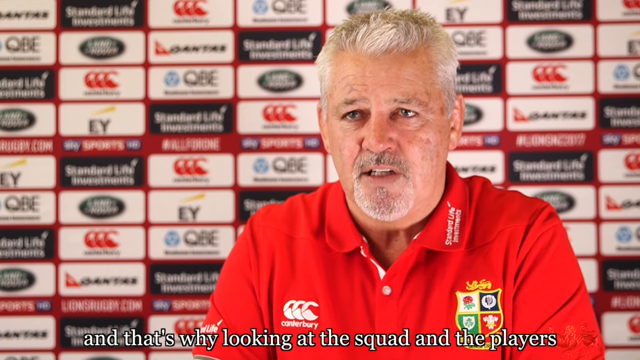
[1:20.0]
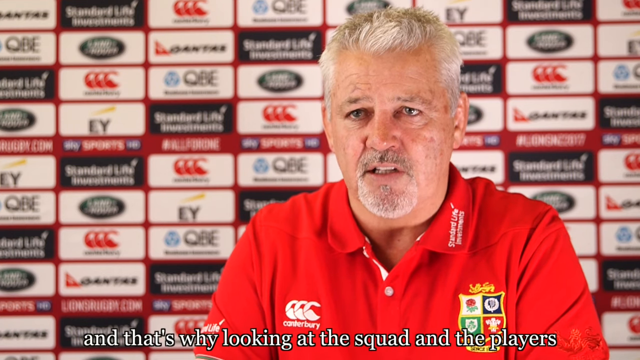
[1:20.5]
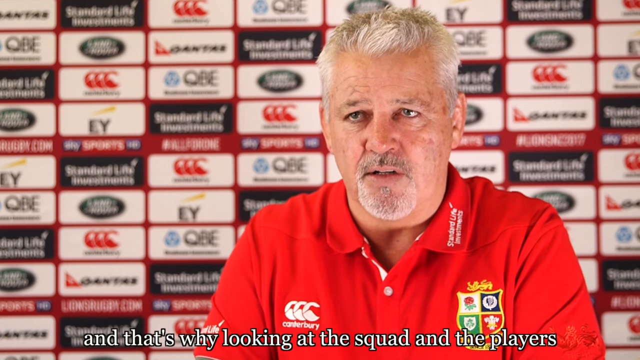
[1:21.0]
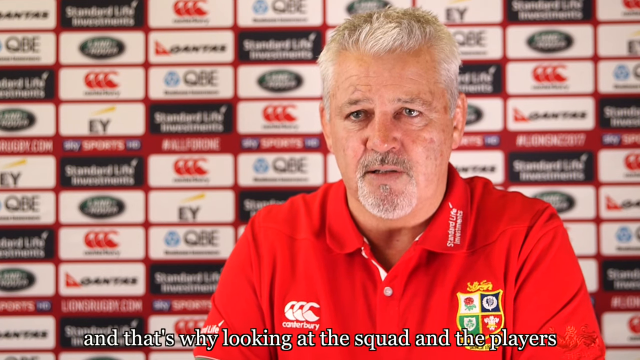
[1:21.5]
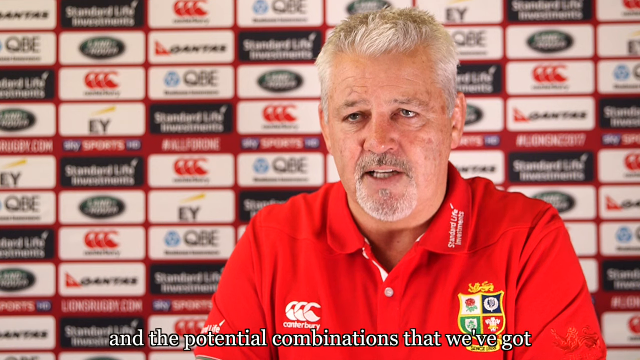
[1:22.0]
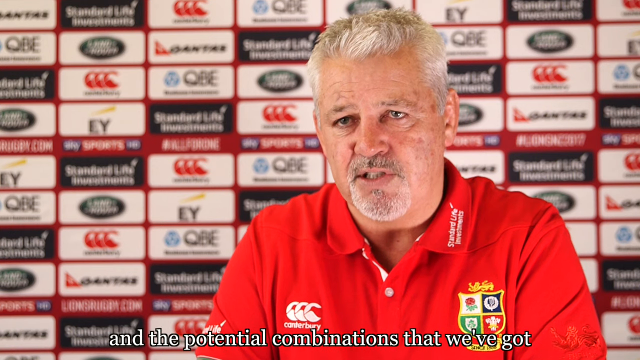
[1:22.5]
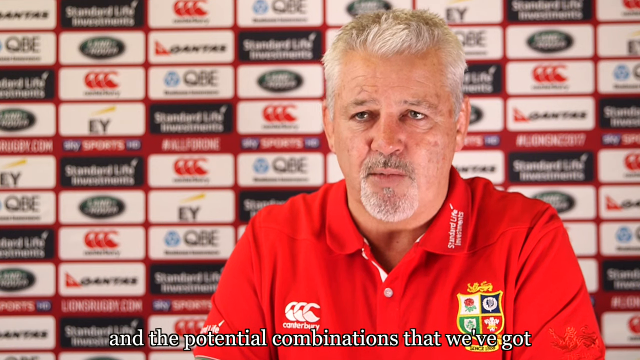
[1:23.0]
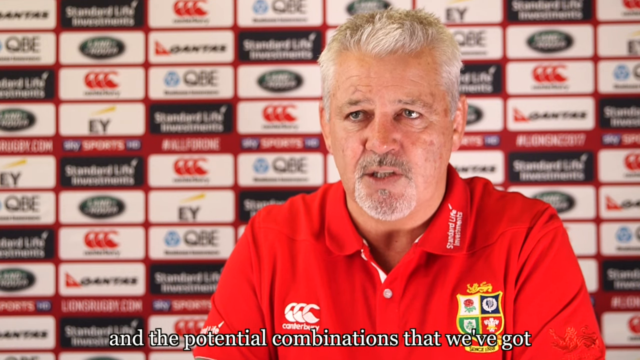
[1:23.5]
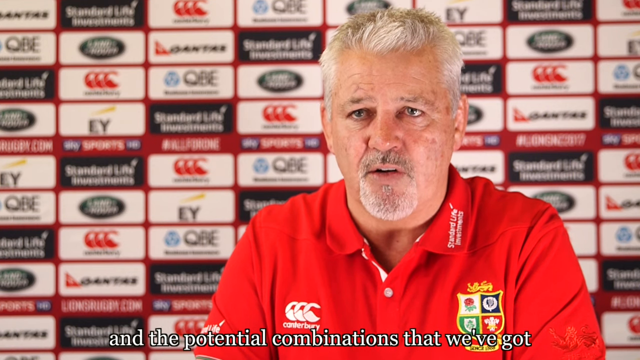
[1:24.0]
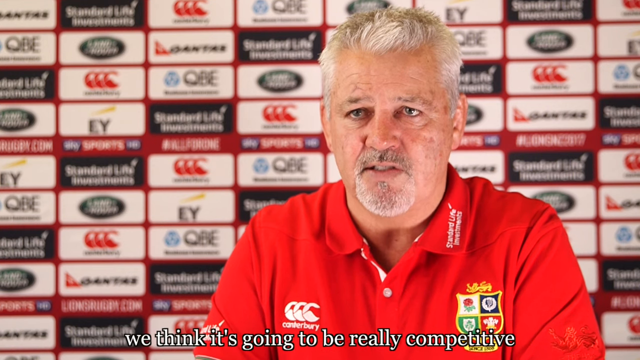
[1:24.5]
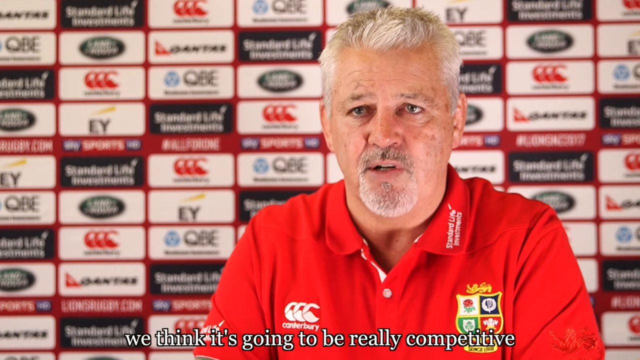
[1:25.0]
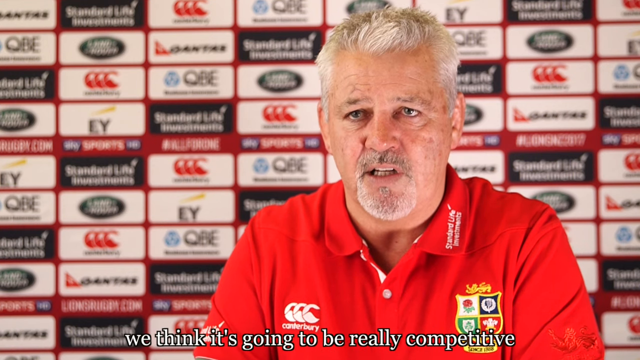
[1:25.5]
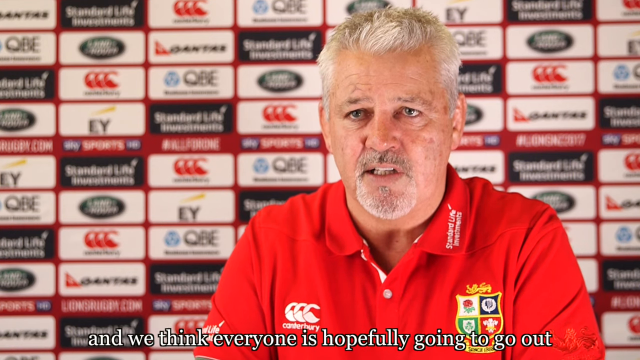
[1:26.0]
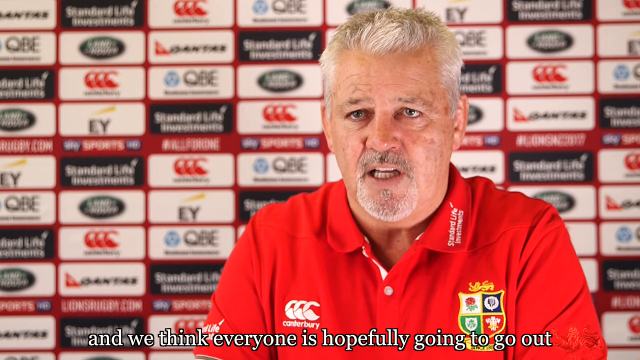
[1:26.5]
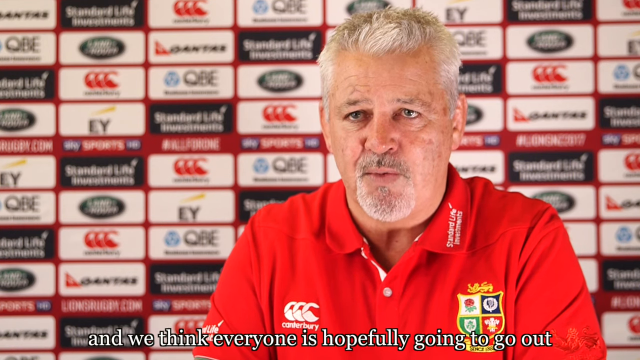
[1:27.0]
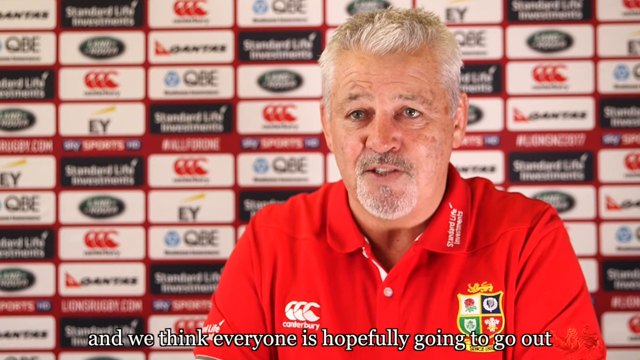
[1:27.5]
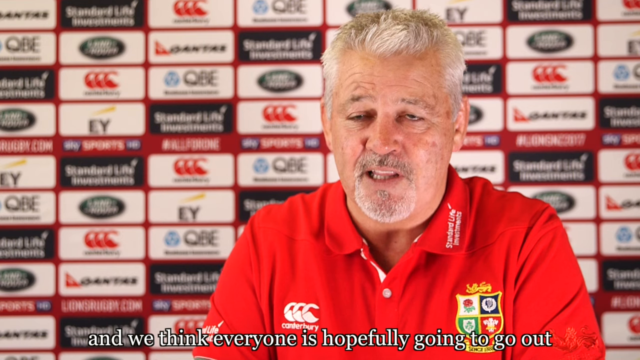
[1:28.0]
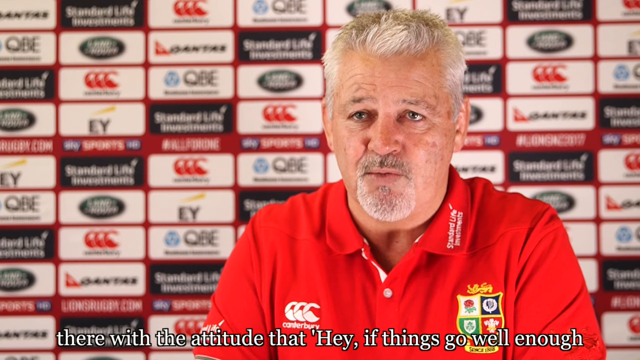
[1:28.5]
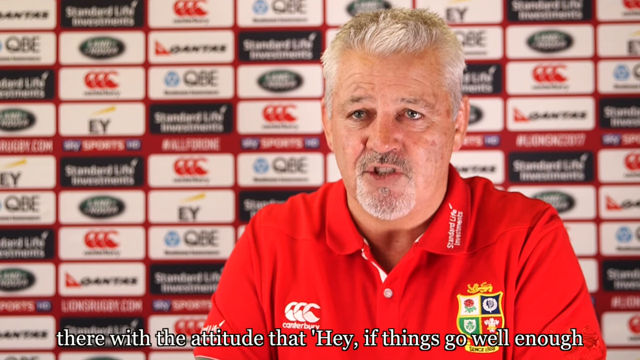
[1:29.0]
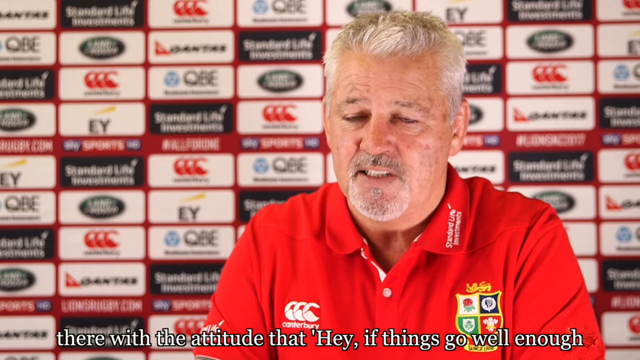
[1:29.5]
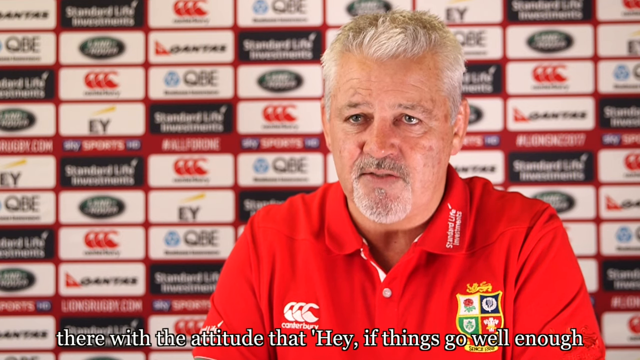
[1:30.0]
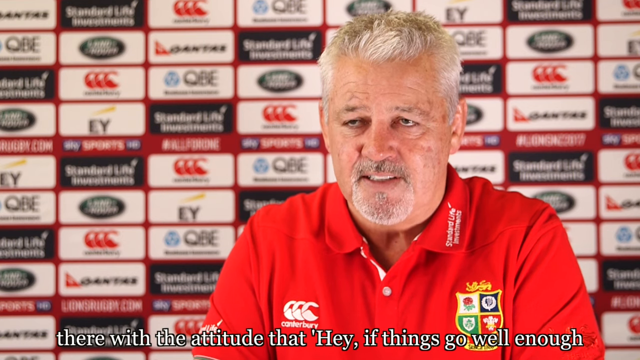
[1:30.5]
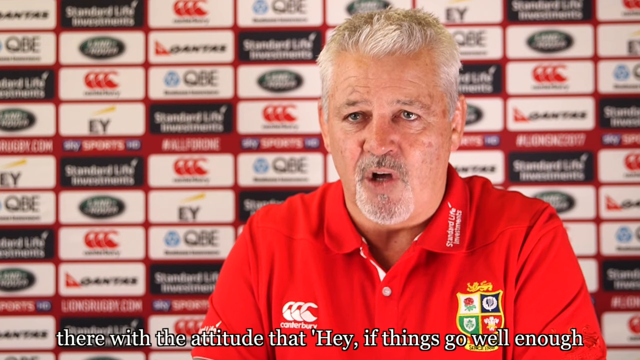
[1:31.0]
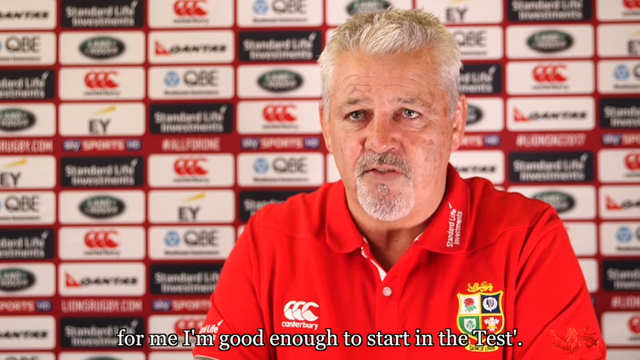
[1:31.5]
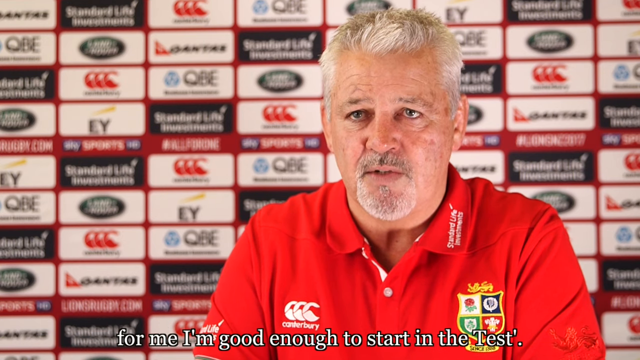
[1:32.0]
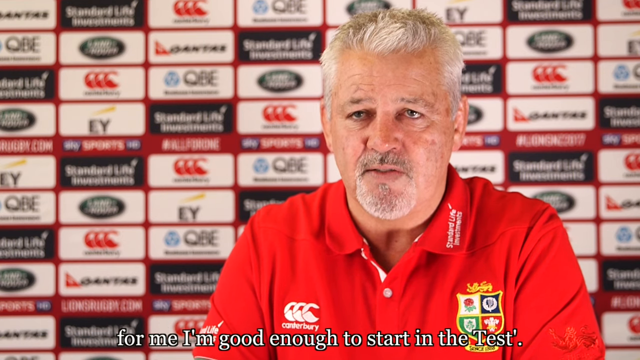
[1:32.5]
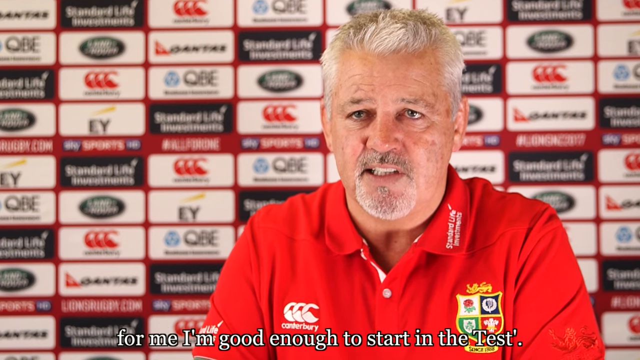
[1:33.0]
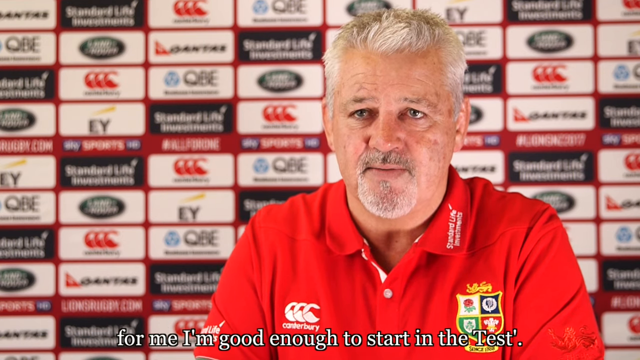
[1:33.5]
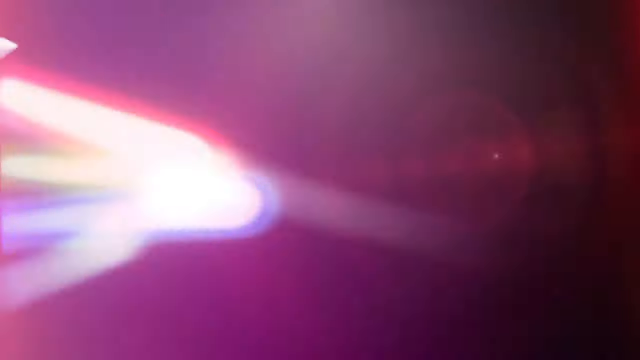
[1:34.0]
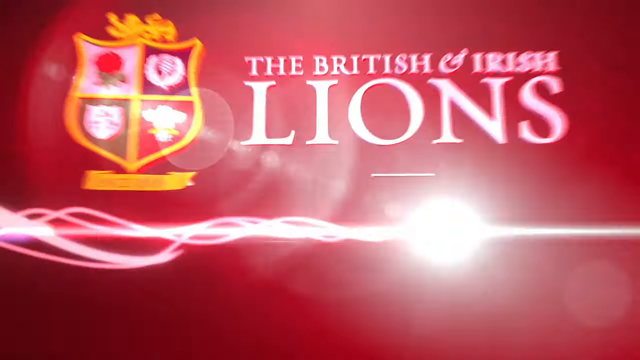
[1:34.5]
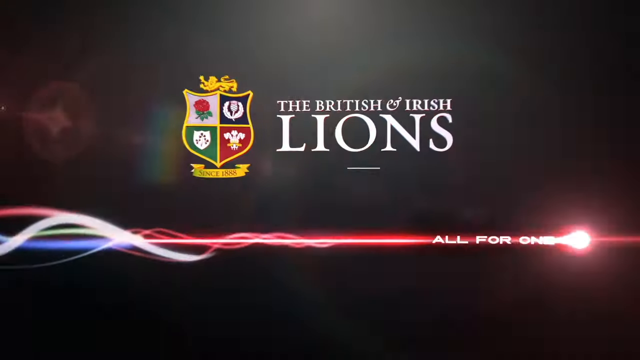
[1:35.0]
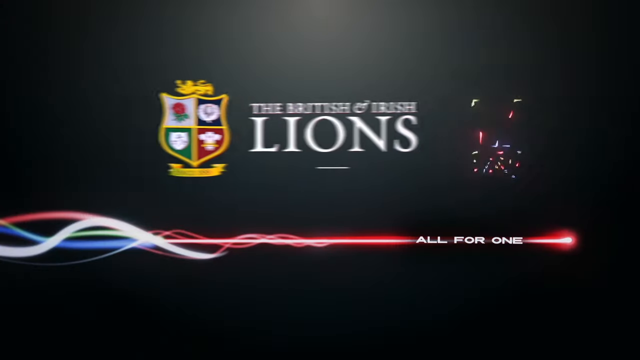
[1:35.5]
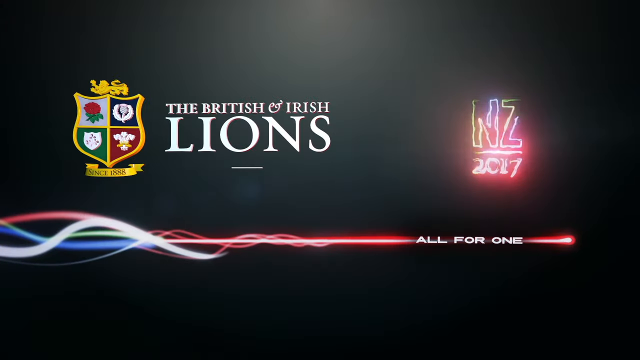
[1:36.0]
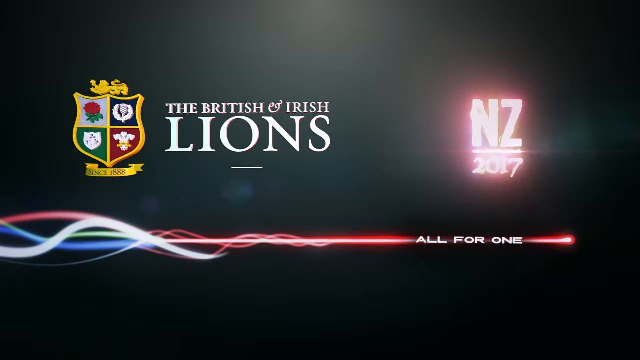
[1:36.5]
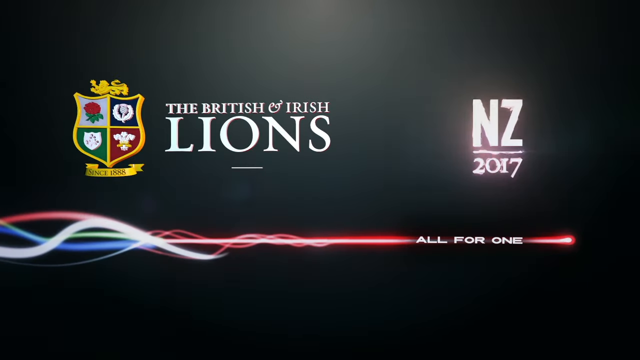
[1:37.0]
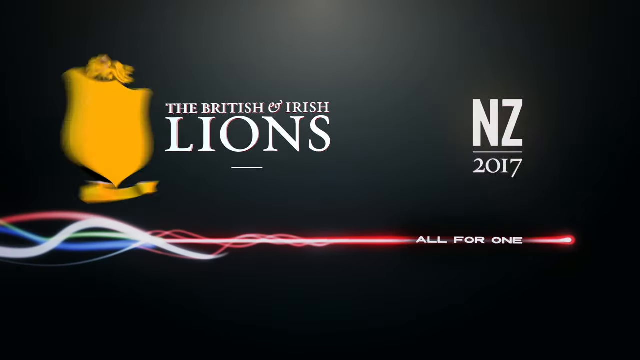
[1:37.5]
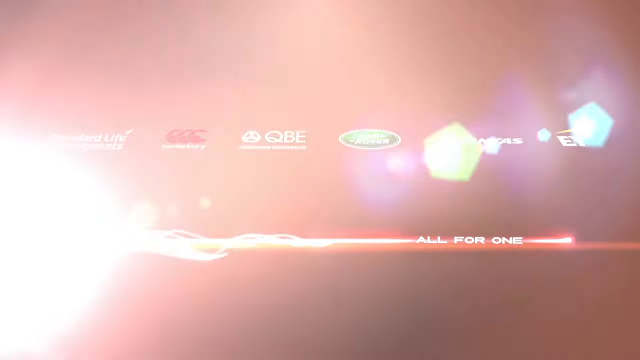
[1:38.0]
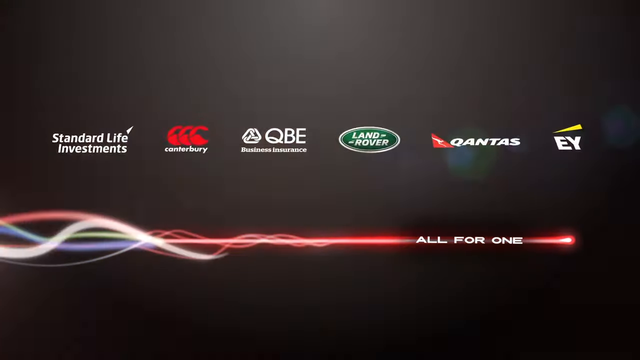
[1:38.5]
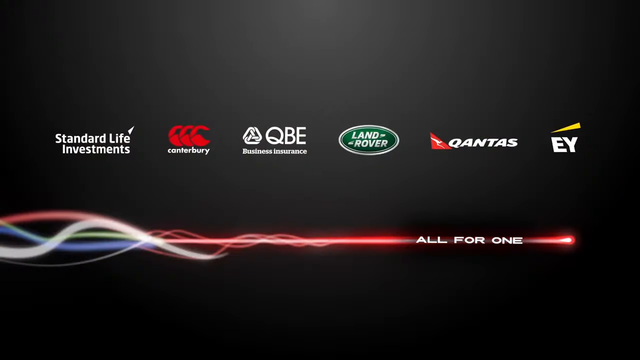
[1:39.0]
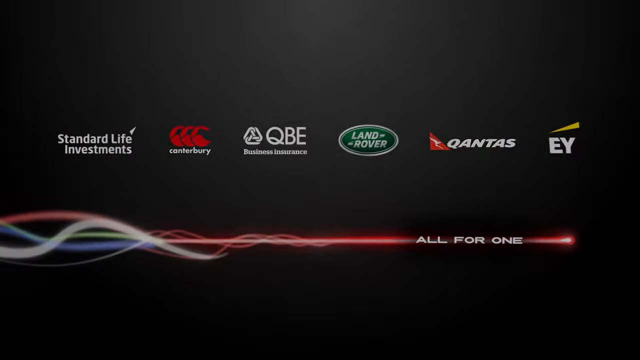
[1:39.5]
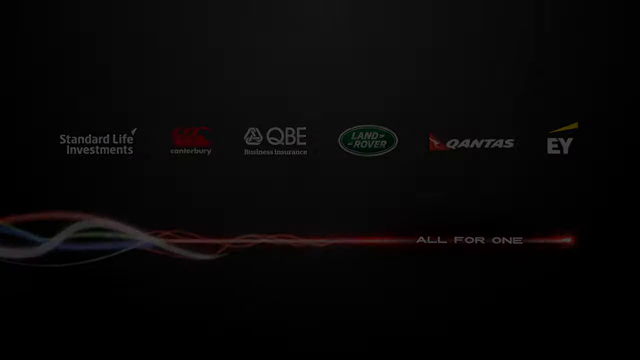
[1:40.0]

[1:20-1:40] Sponsors appear, including Standard Life Investments, Land Rover and three others, and the words "all for one" are written. The same man with white hair, middle-aged and around his 50s, wears a red top with his team's logo. The scene changes to show different logos and him, including the British Lions logo. He seems very excited.